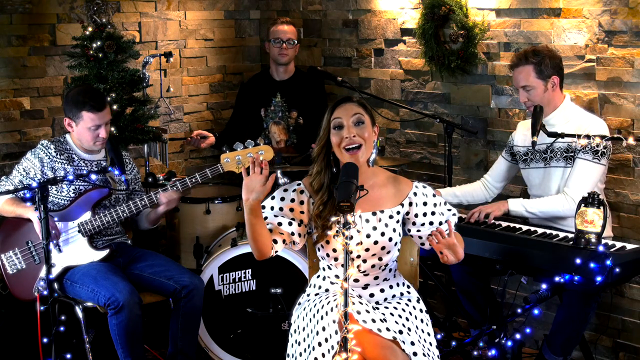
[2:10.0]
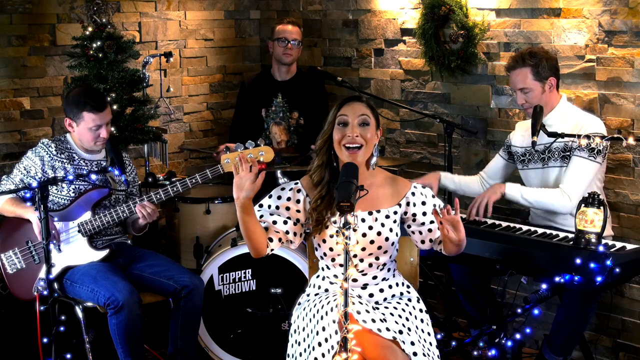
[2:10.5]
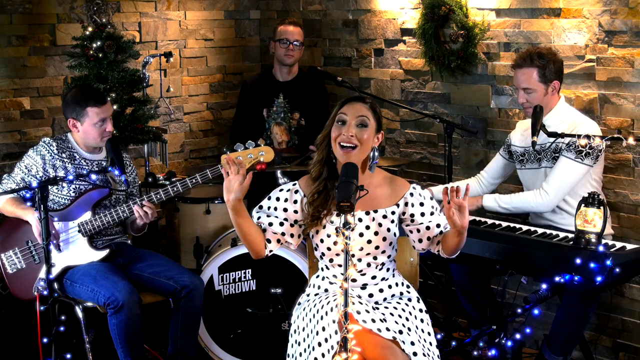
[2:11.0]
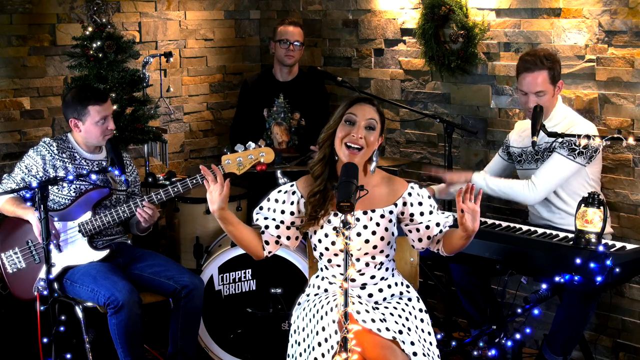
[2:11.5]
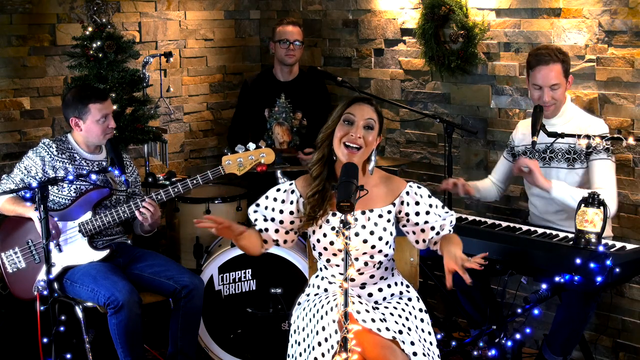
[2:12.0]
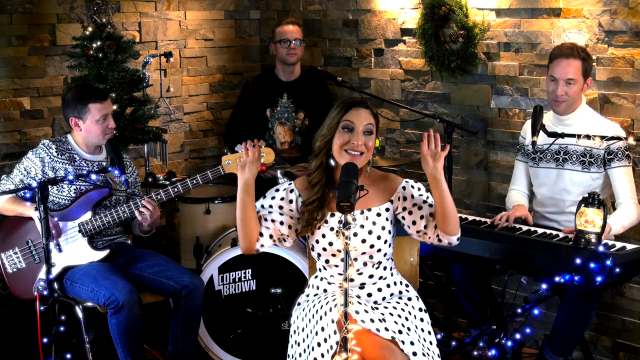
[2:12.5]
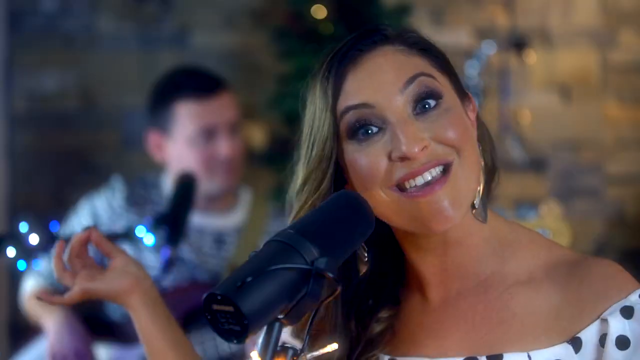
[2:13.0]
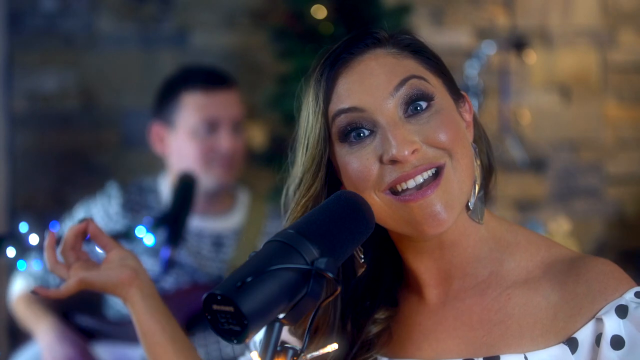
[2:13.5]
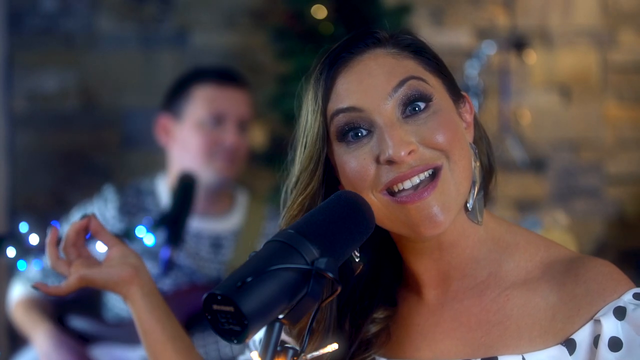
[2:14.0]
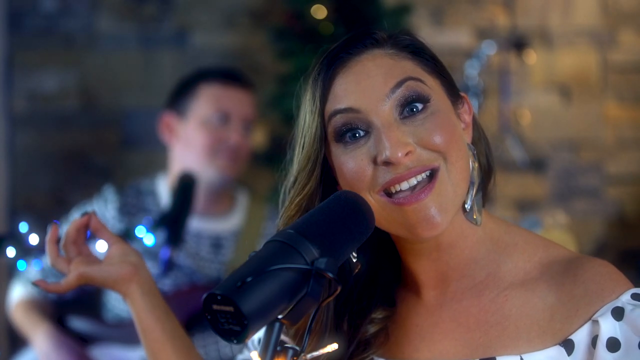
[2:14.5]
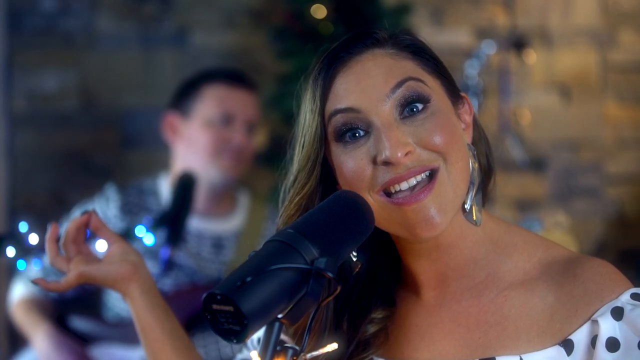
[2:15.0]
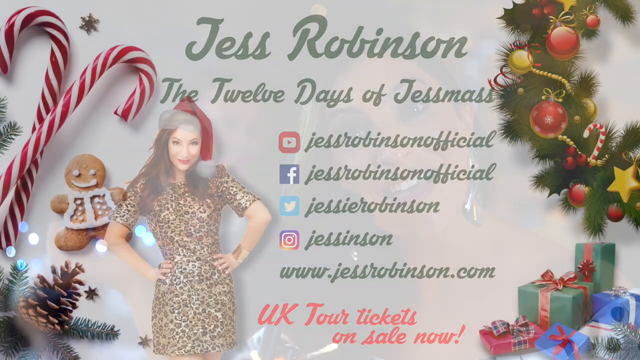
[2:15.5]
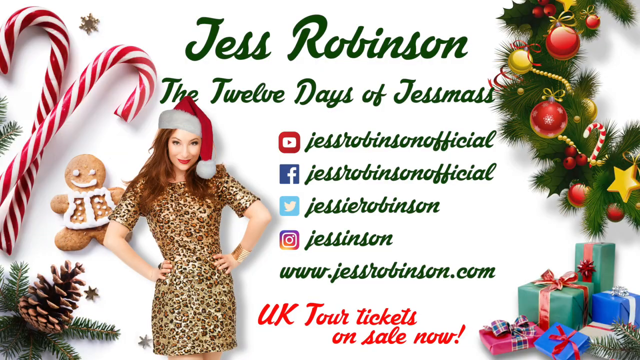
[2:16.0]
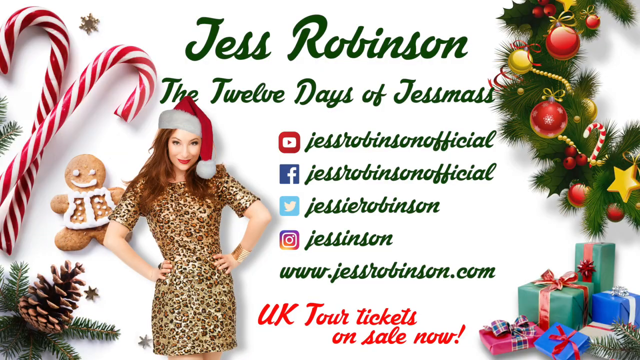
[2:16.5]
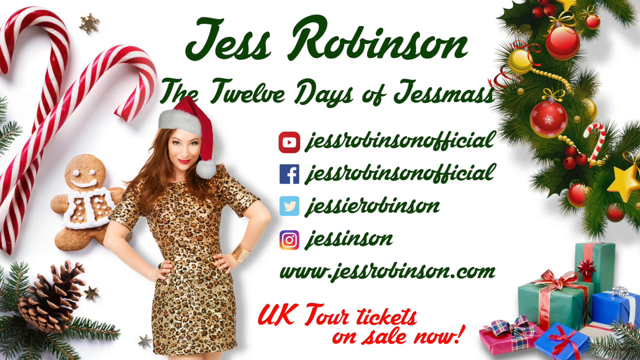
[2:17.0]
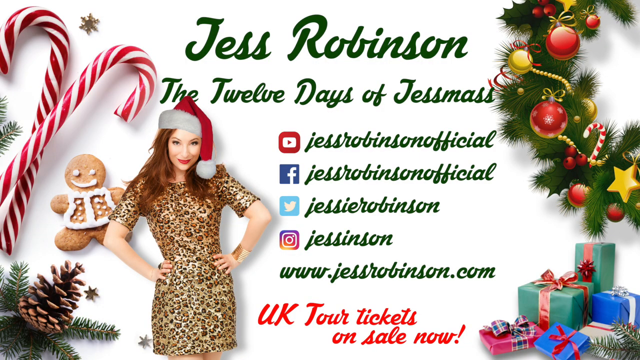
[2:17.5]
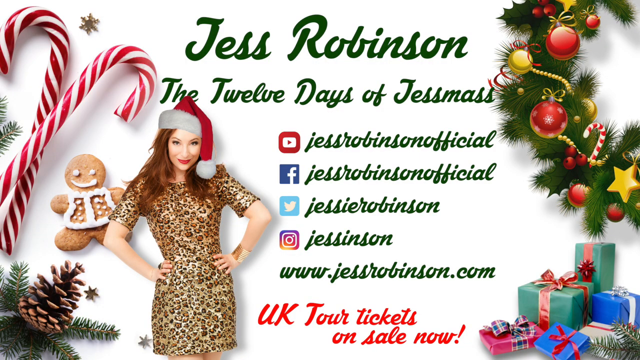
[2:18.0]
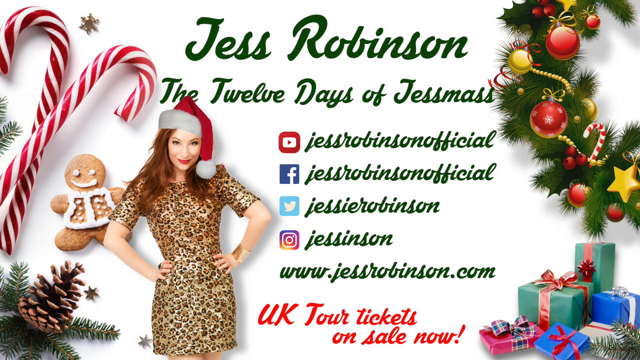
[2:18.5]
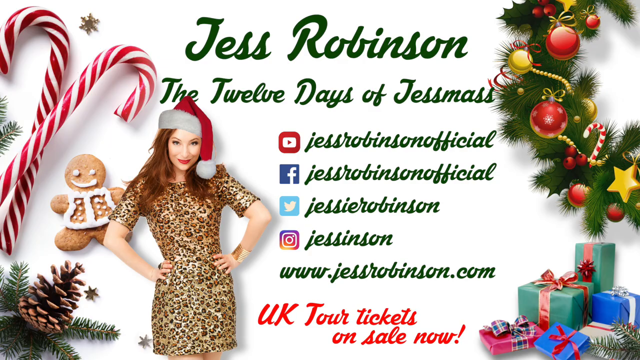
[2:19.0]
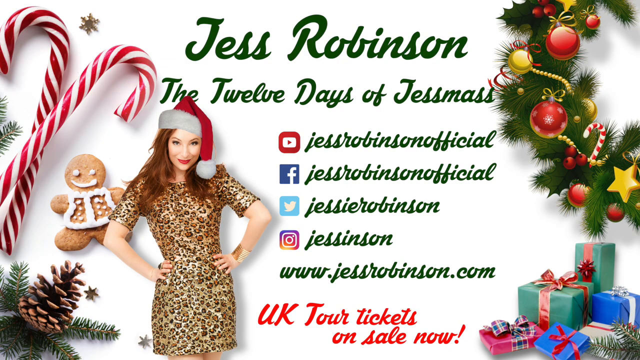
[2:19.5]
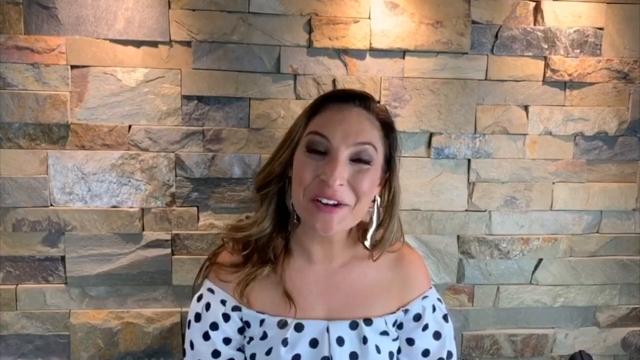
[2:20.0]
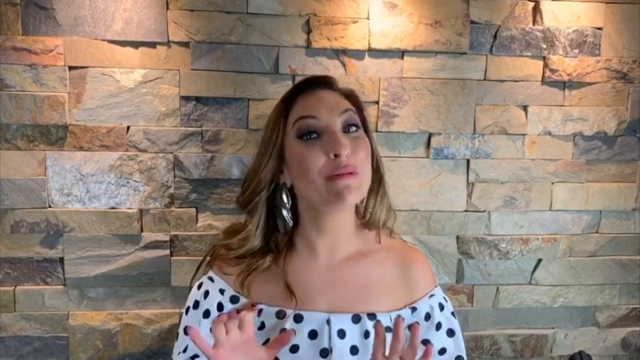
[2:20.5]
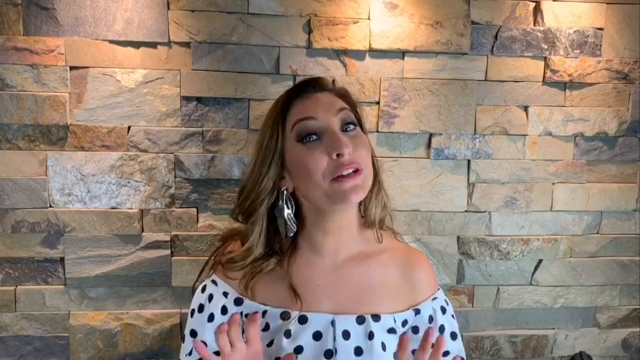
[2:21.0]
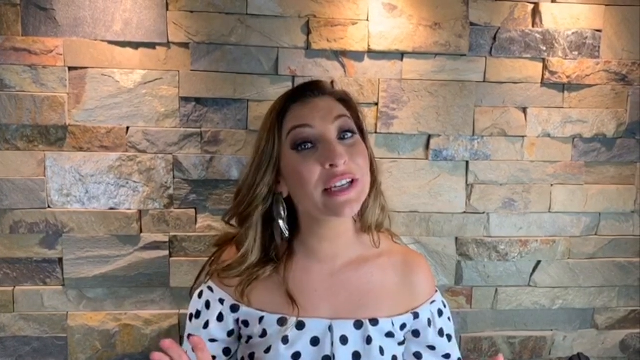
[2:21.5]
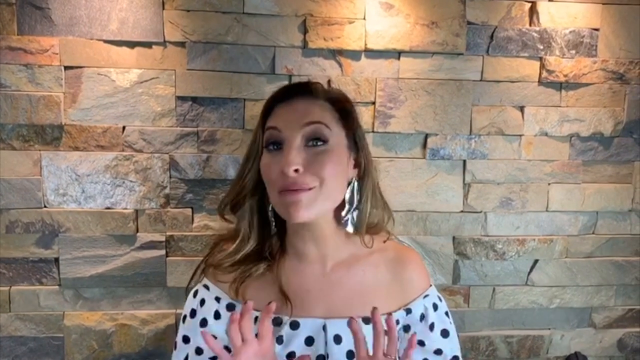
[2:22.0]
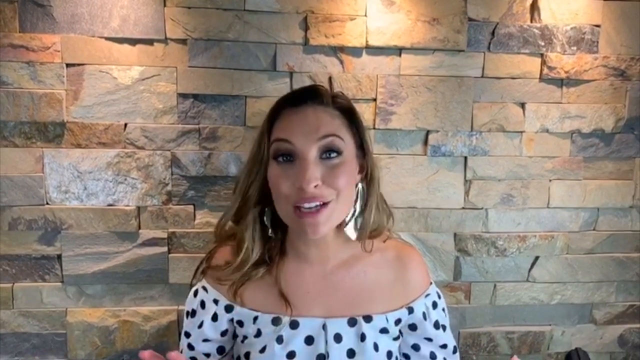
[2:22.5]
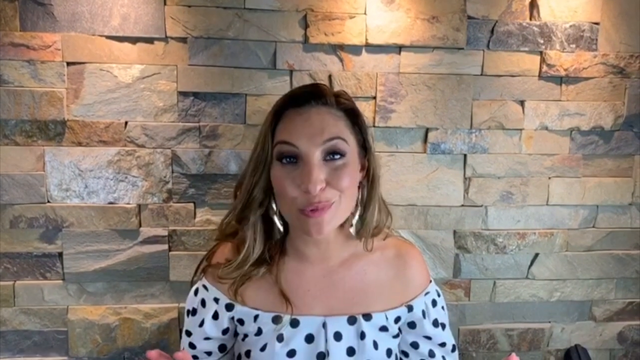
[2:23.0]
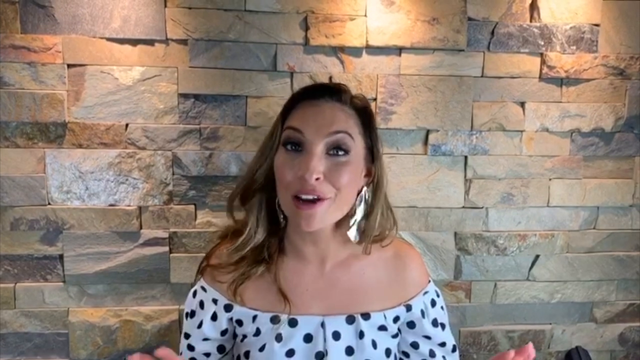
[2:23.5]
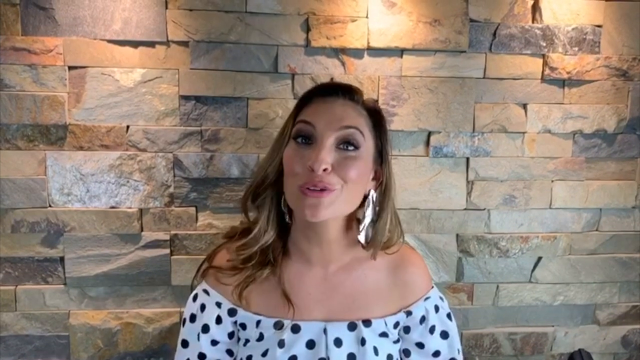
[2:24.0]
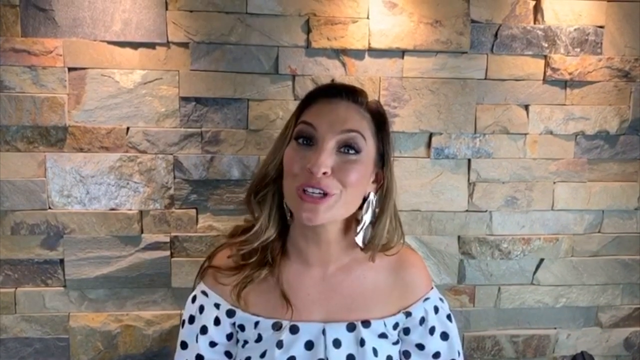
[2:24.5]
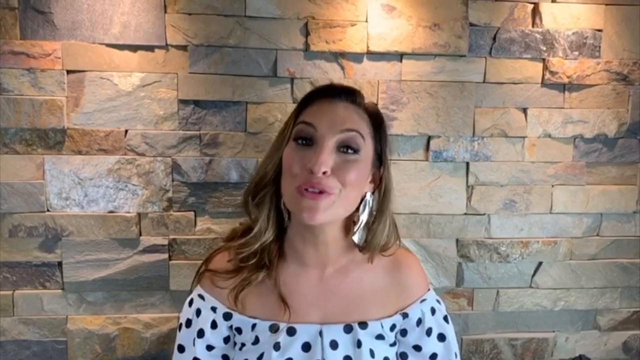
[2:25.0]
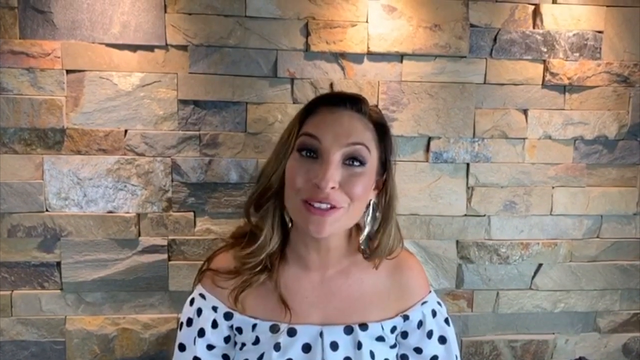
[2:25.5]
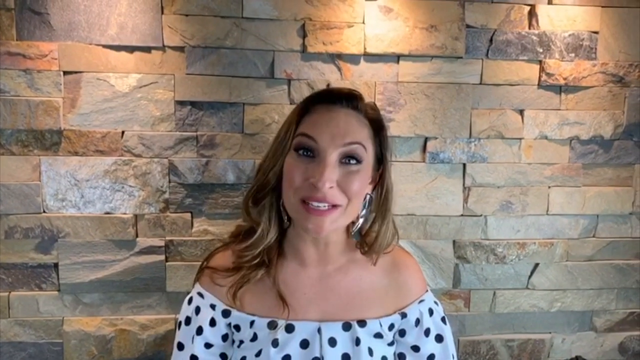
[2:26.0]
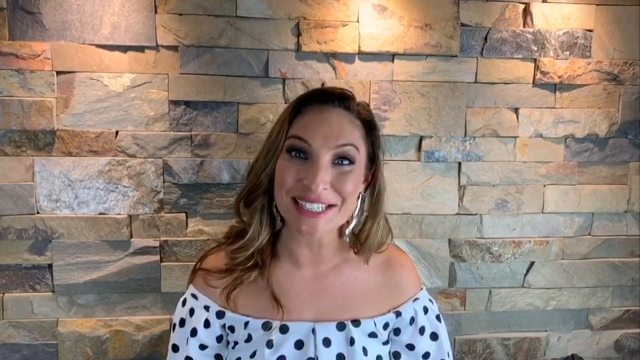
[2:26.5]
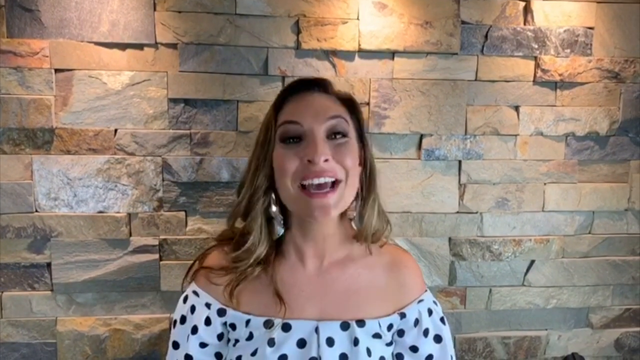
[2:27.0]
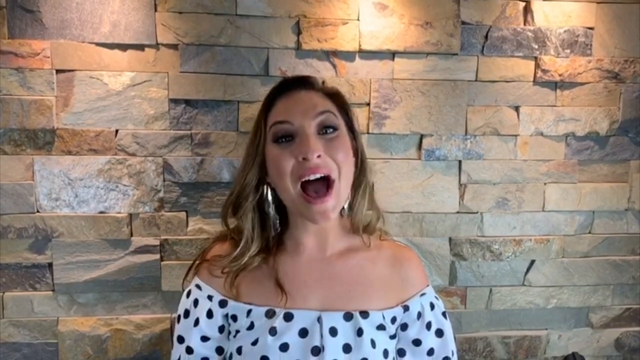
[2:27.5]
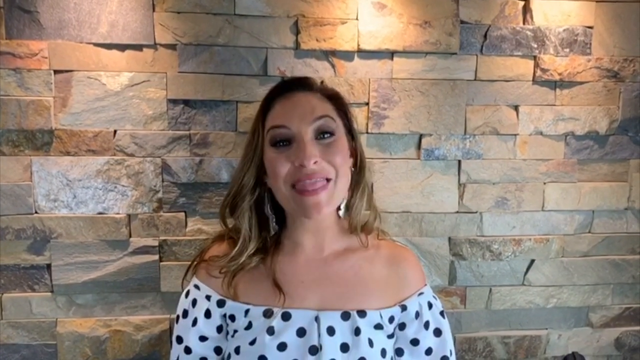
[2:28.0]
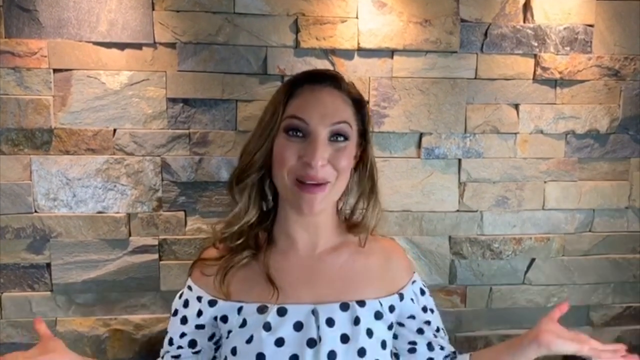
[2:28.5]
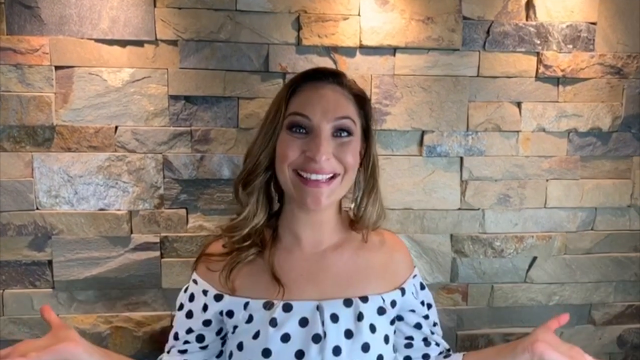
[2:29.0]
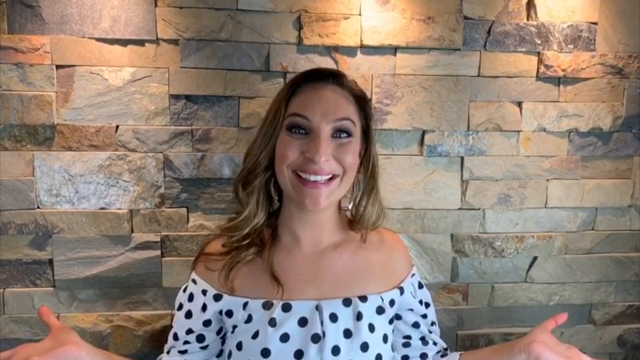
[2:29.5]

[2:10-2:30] A band plays some type of concert: a woman sings while a guitar player, a drummer and a keyboardist play. After just a few seconds of her singing, a computer-generated page appears with different links for social media. Her name, Jess Robinson, is up on the screen, along with a title that includes "the 11th day of".